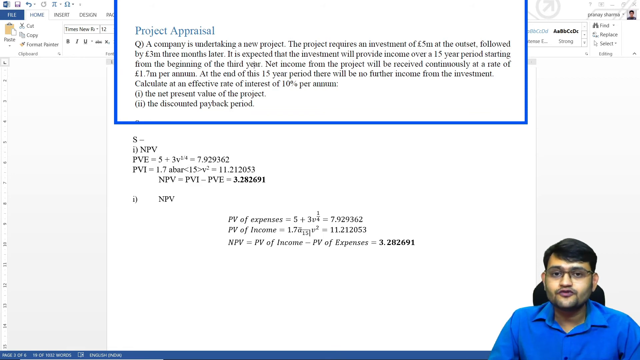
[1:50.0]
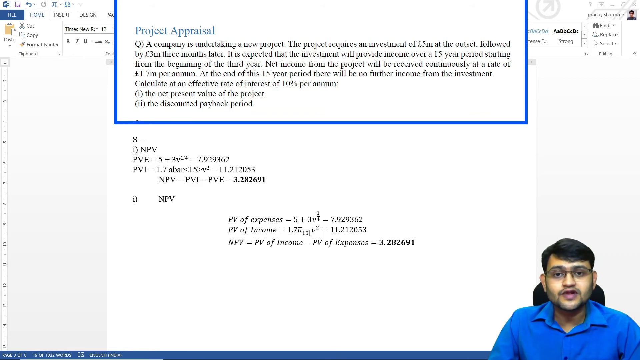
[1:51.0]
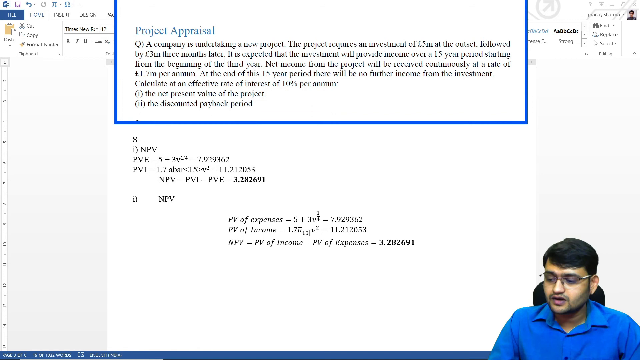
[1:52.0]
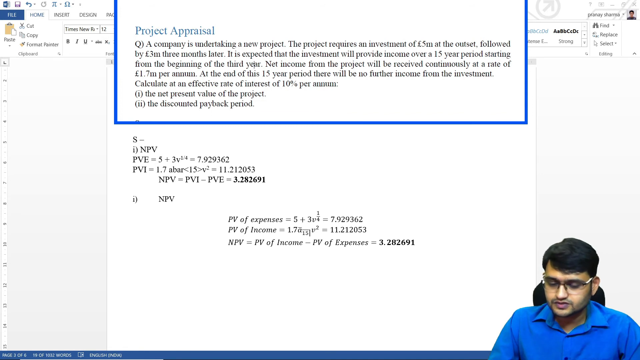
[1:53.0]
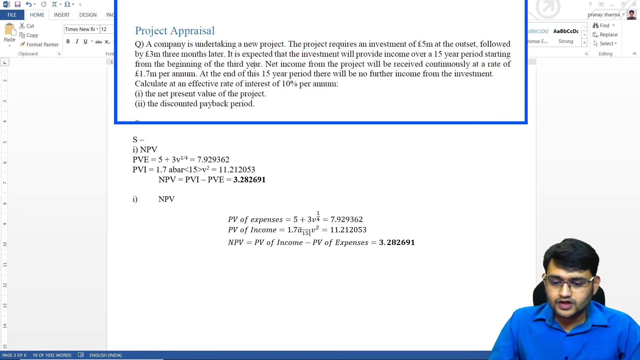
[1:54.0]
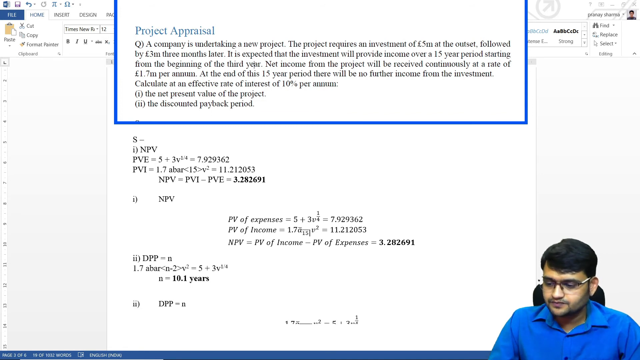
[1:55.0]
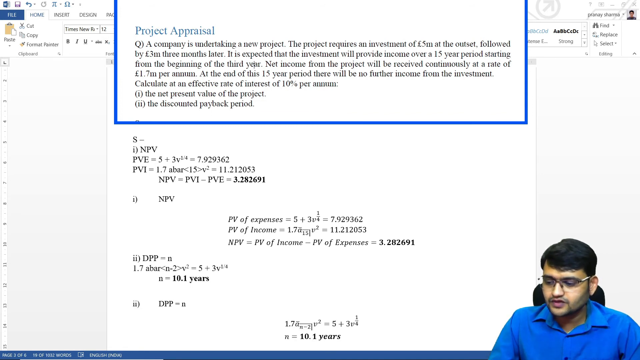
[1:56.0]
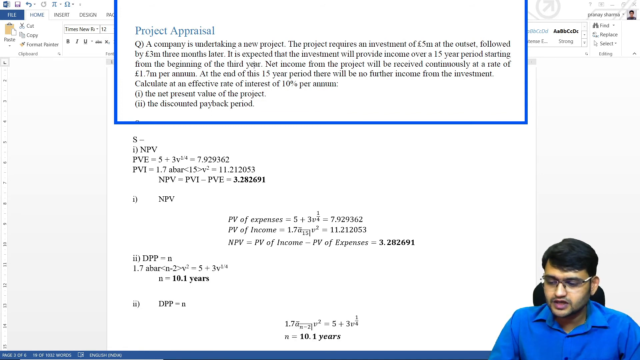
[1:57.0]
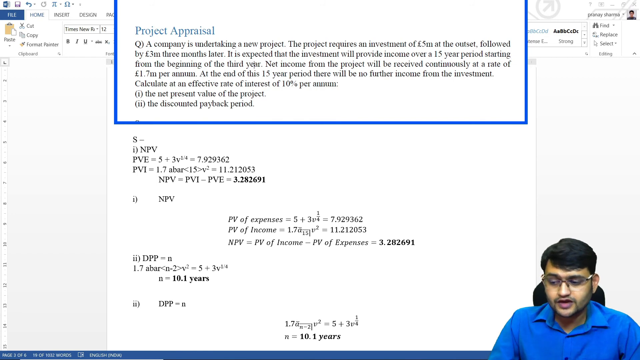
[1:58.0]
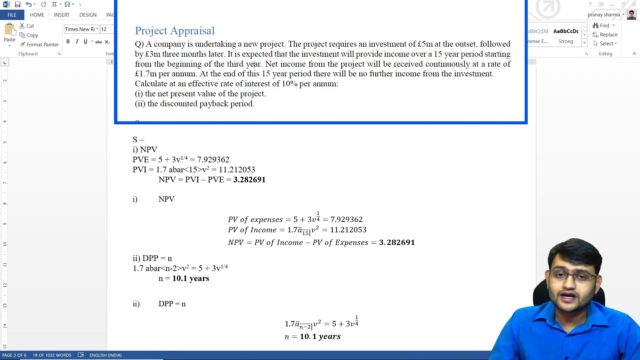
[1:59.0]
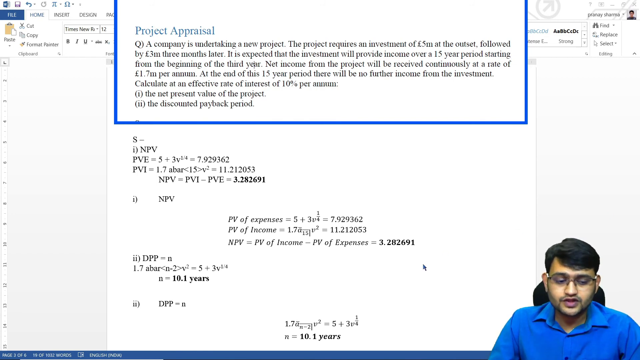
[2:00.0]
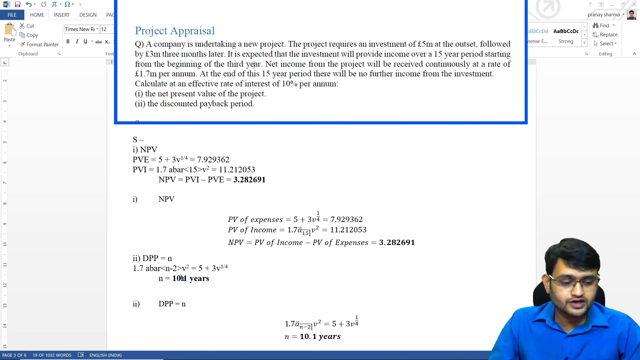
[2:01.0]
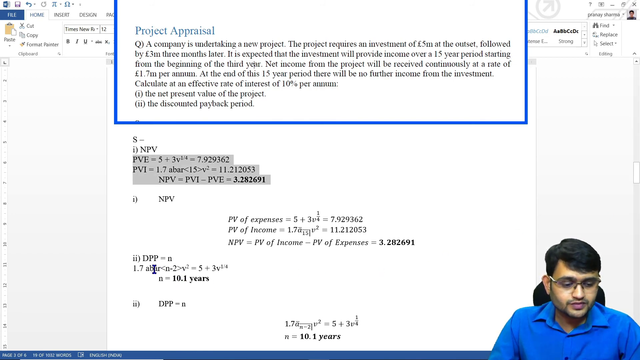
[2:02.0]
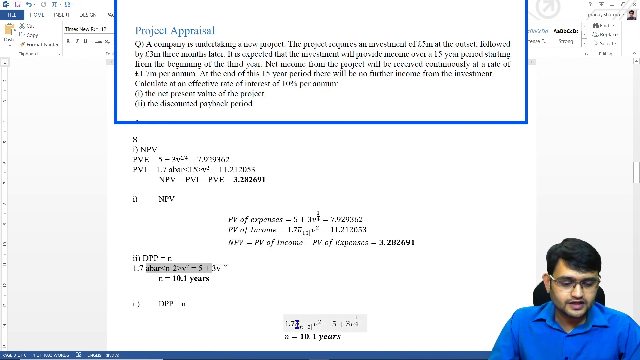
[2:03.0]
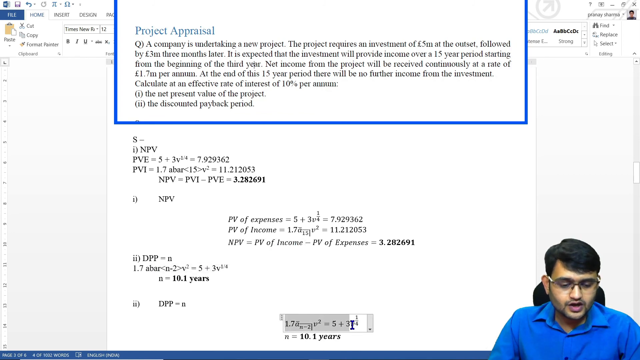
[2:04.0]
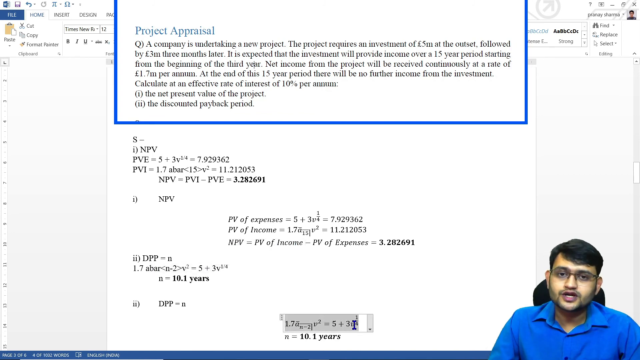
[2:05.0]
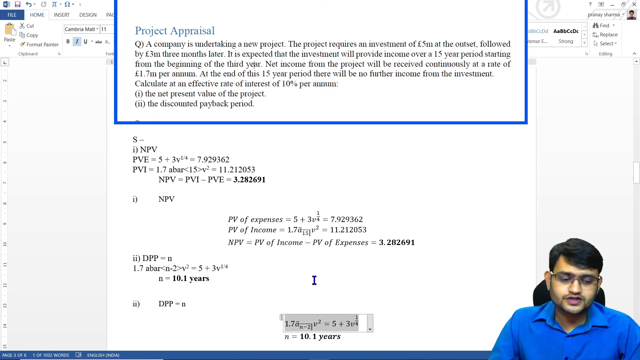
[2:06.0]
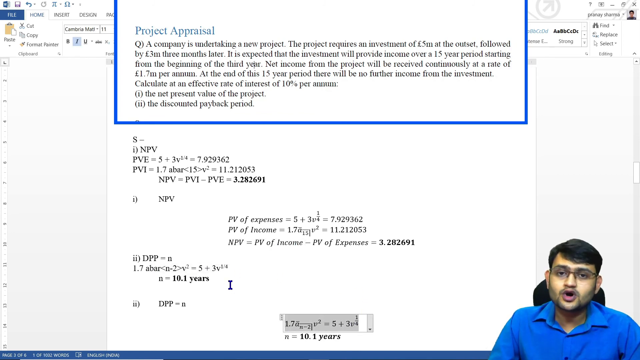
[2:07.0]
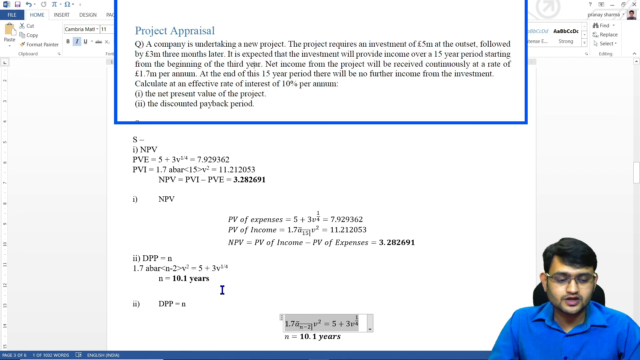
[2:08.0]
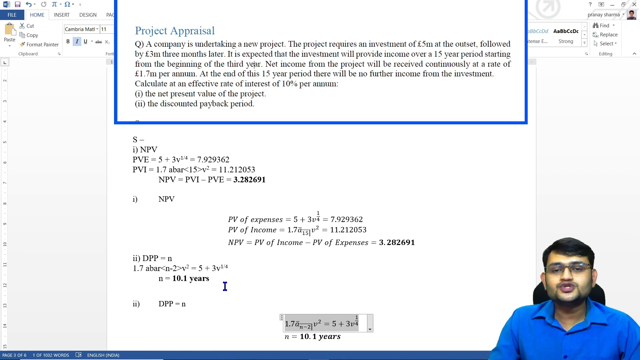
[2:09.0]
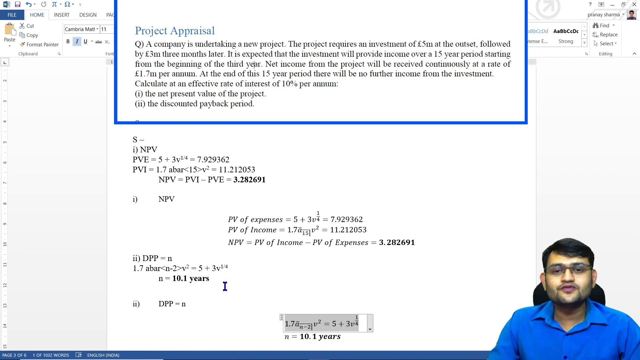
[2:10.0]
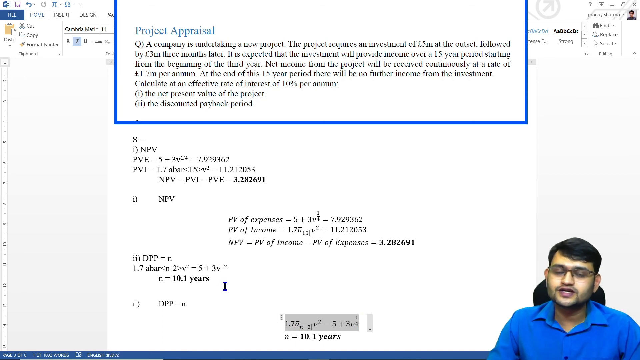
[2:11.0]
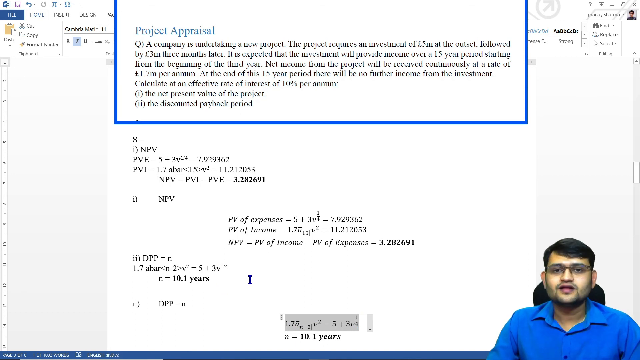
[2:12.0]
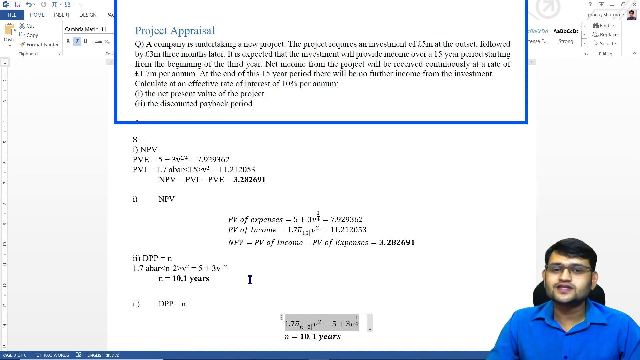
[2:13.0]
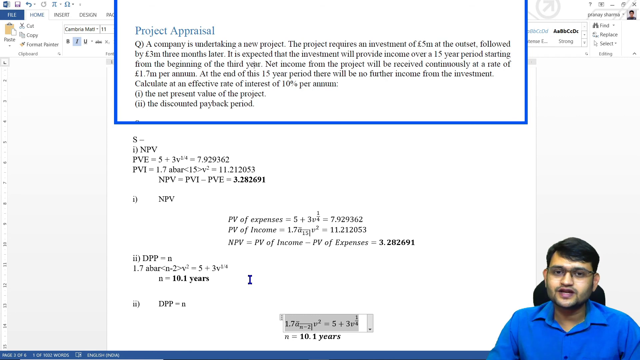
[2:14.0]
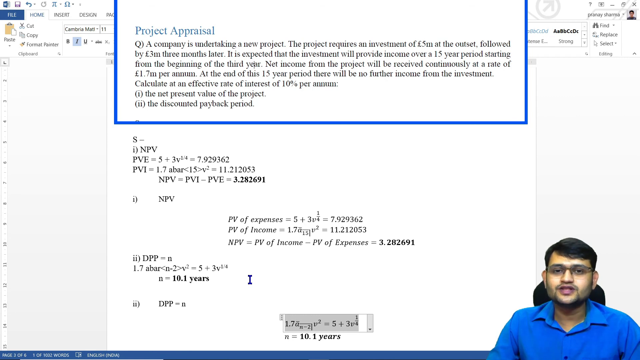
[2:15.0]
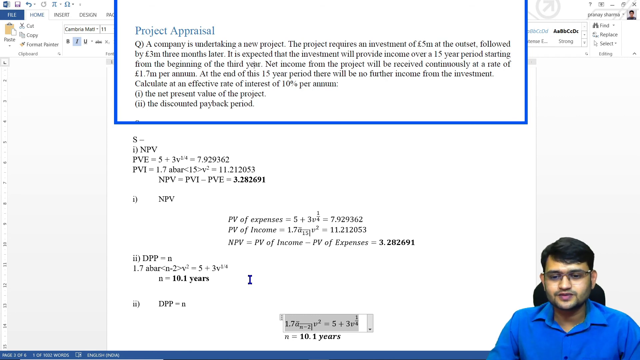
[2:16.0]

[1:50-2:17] The man continues to speak as, beneath the formula for the first part, which calculates the net present value of the project, the formula for the discounted payback period is revealed. It reads "DPP = N", under that "1.7 A bar <N - 2> 3 V squared - 5 + 3V to the 1/4", and under that "N = 10.1 years". Below that is a second-part label with "DPP - N", and at the very bottom of the screen is an equation of 1.7 followed by the same unidentified symbol from the first section, "= 5 + 3V to the 1/4", and under it "N = 10.1 years" in bold. The man continues to speak as the video ends.